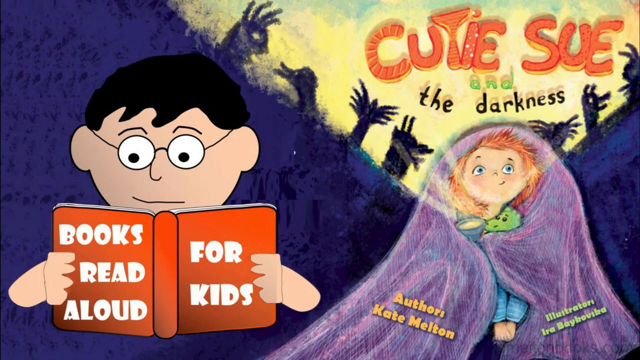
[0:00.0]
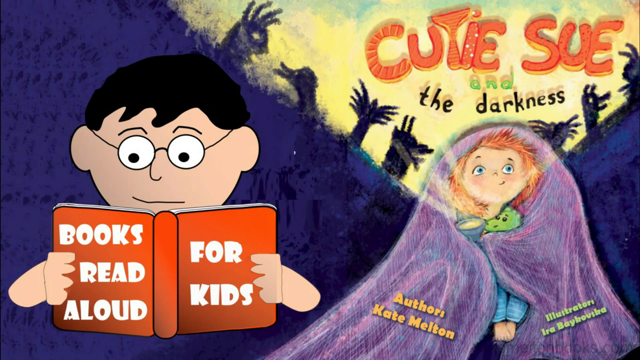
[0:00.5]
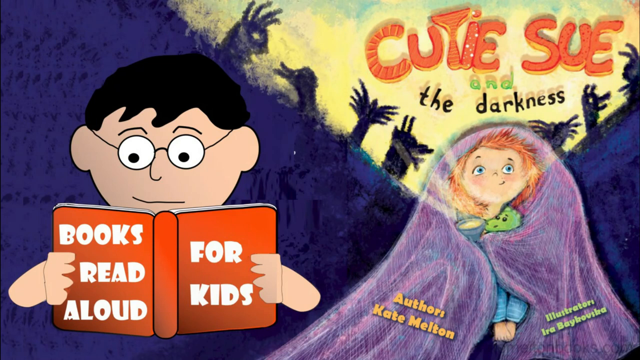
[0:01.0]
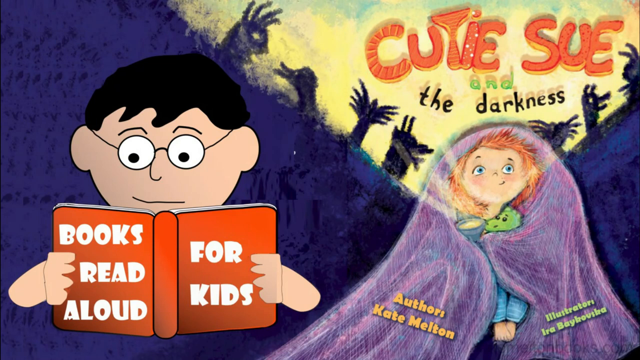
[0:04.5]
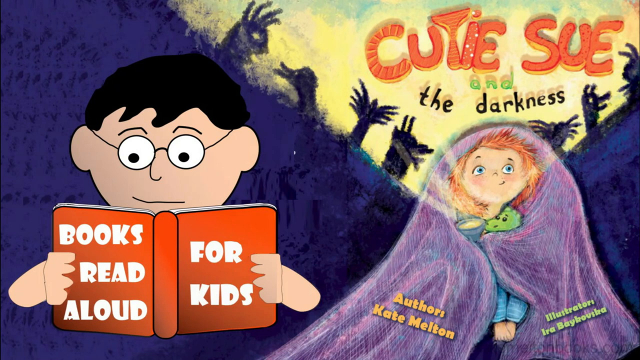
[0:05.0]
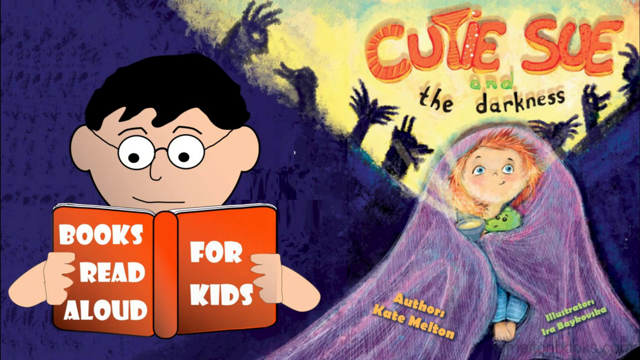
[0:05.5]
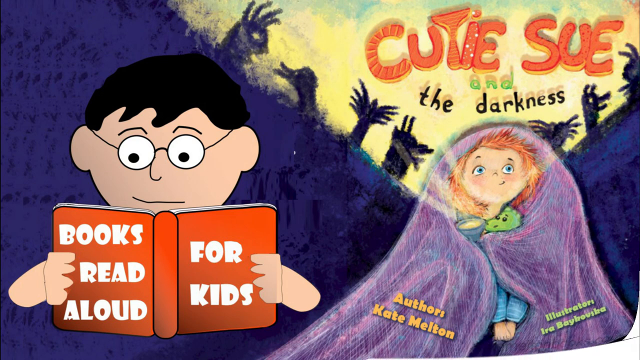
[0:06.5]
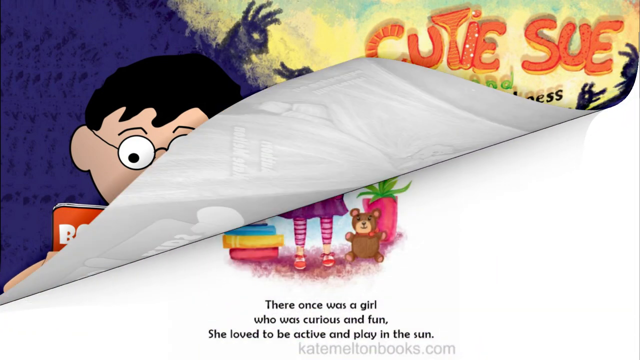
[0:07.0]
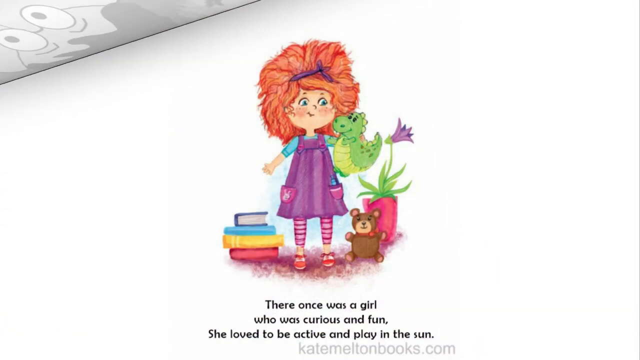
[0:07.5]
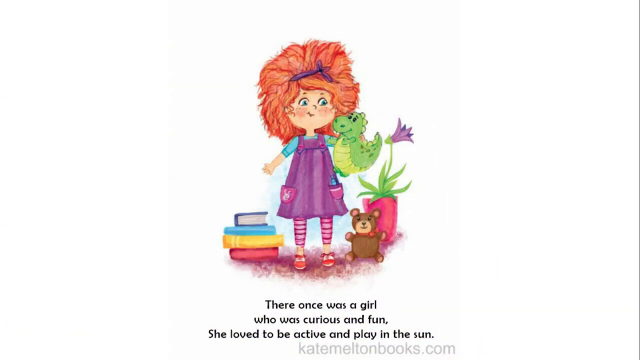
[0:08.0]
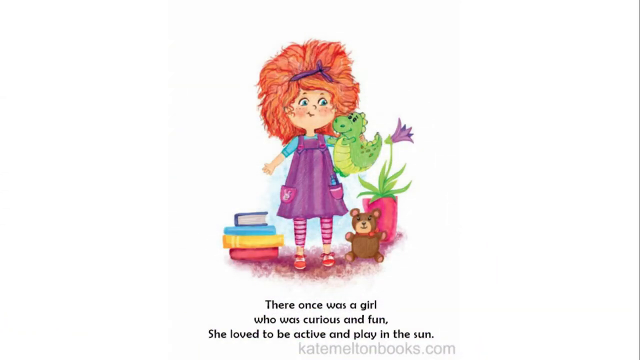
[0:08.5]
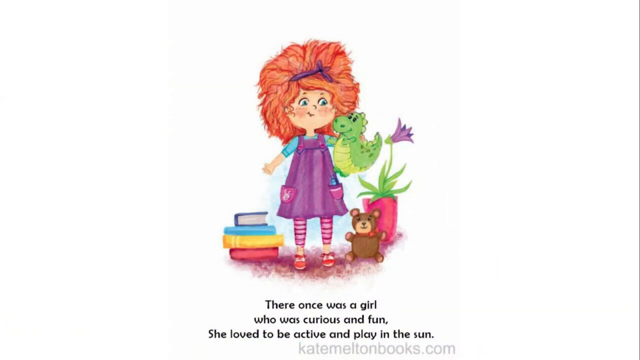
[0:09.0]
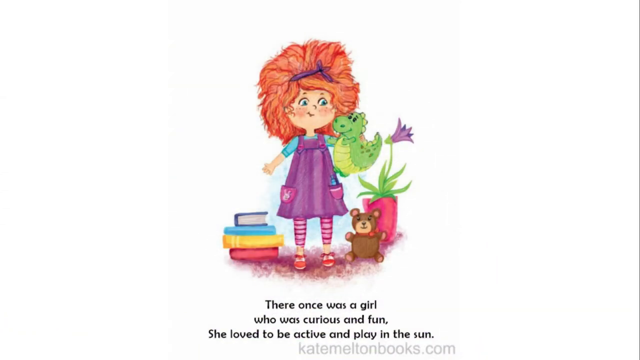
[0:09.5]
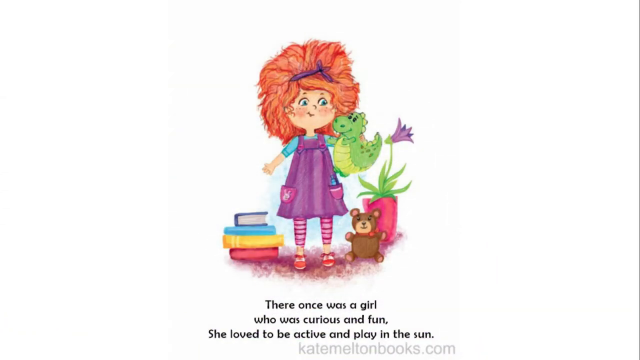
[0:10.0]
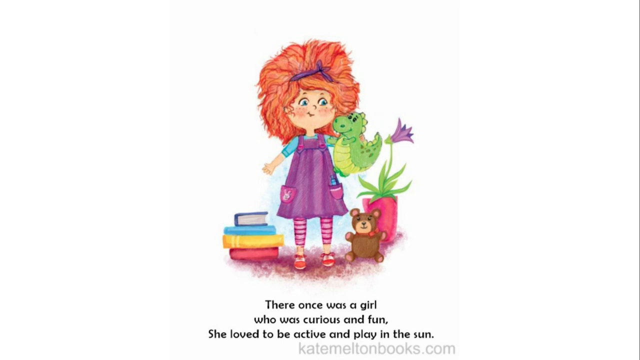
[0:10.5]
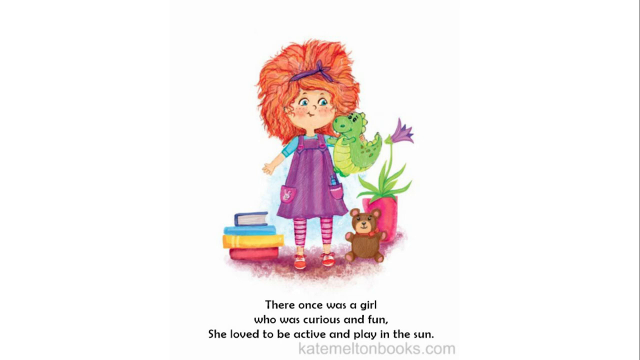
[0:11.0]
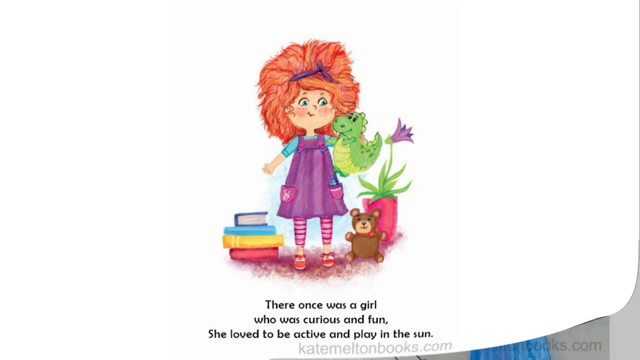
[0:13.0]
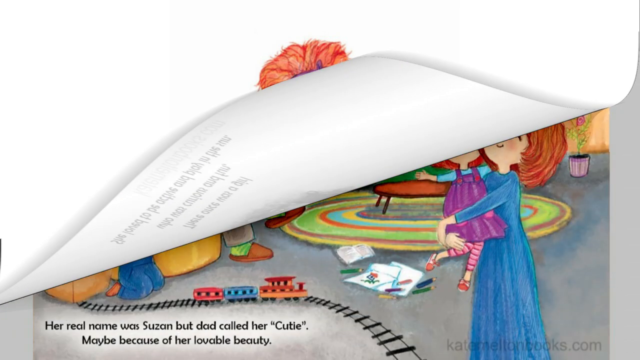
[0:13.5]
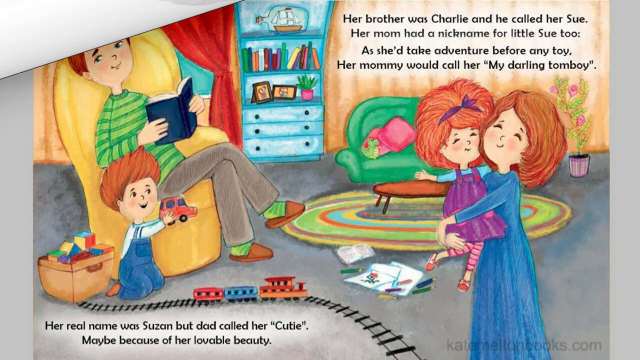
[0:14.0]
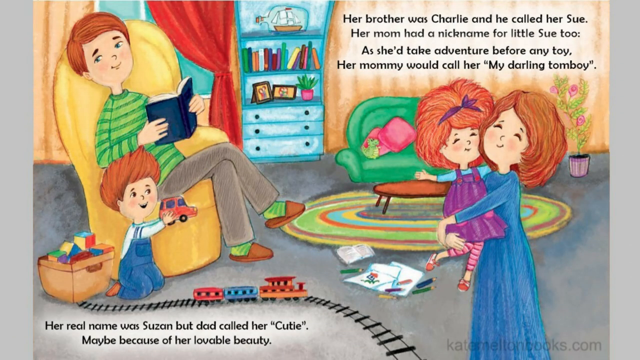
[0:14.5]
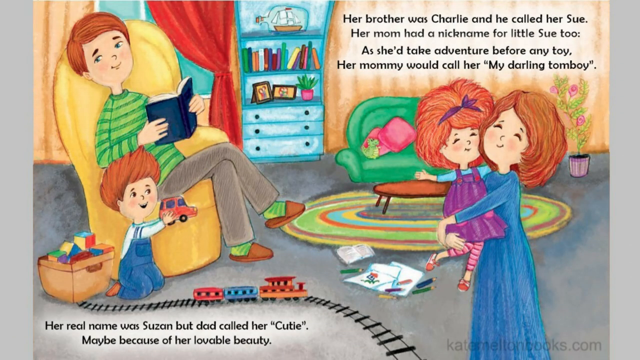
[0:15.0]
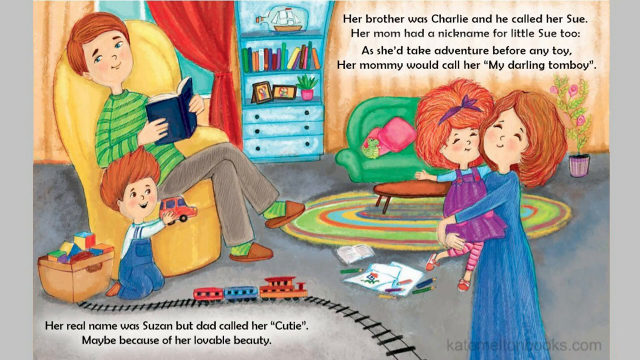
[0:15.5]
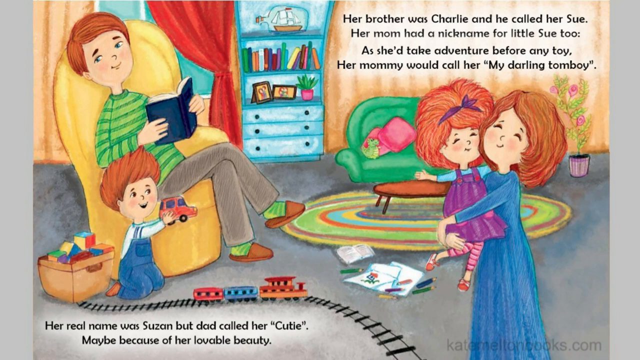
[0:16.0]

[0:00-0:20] The front cover of a storybook is displayed. In the top right, orange writing reads "Cutie Sue in the Darkness." Below it is a girl with orange hair with a blanket covering her; she holds a flashlight and a green dinosaur. Darkness surrounds her, and there are shadows all around the girl on the right. At the bottom the text reads "Author Kate Melton." On the left side of the page, a kid with black hair and glasses reads an orange book, with the text "Books read aloud for kids." The video stays on this page, and the text "Illustrator Ira Iovska" appears. It then changes to a new page reading "There was once a girl who was curious and fun. She loved to be active and play in the sun." This page shows a girl with orange hair holding a dinosaur, with books around her.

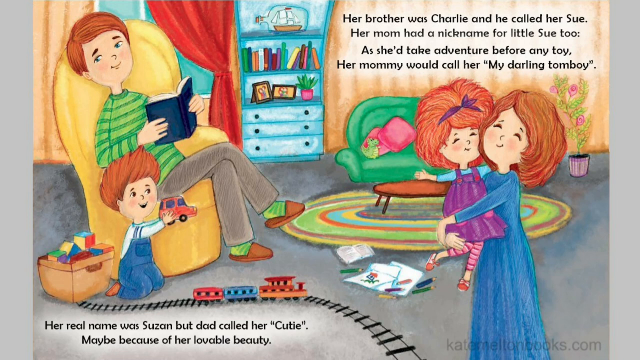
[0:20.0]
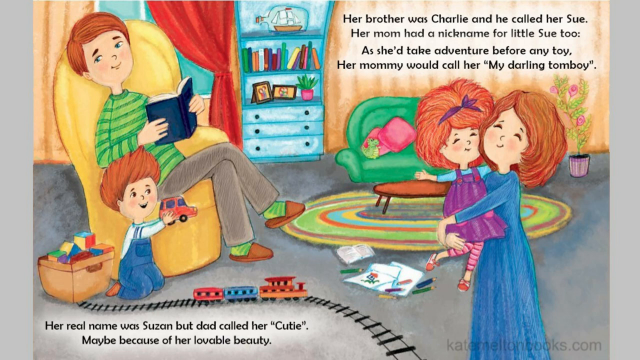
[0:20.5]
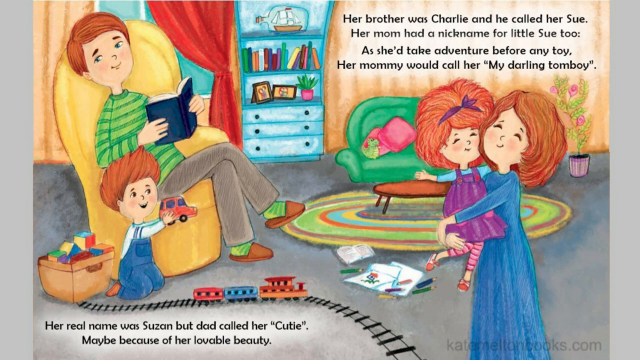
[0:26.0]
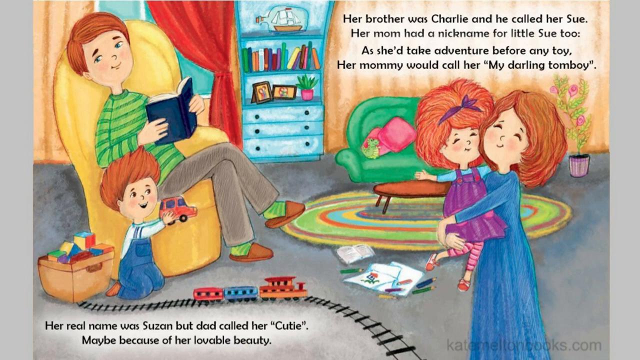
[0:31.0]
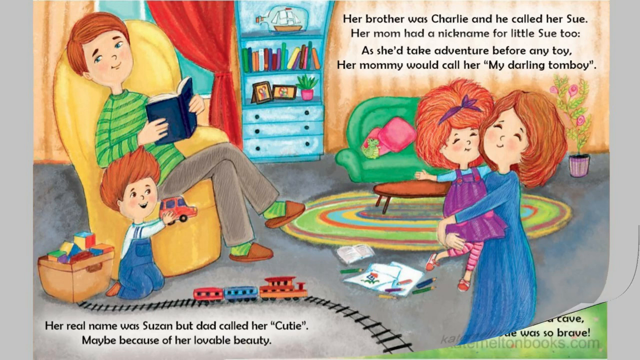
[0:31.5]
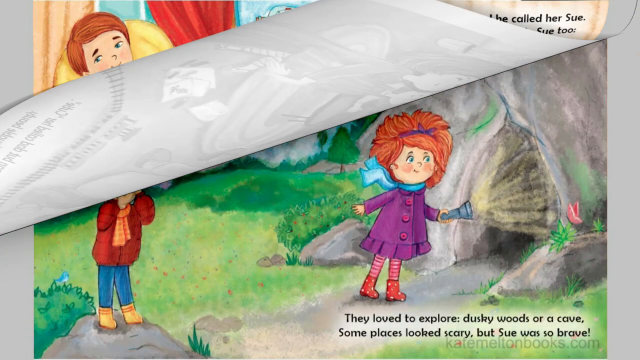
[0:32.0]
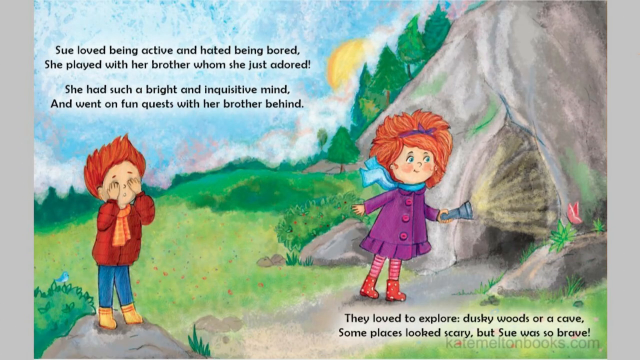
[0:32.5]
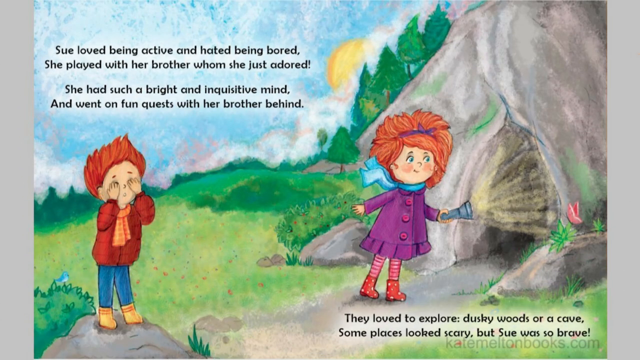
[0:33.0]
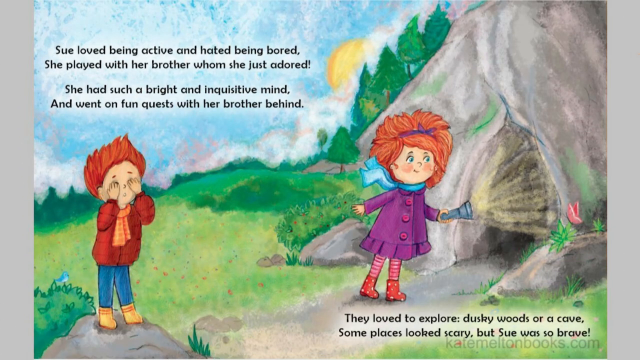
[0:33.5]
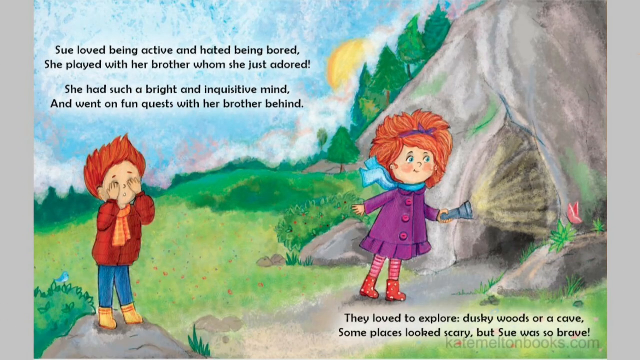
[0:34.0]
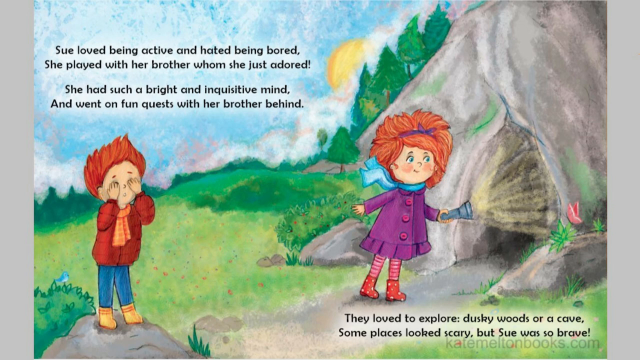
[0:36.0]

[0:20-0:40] A page from the book shows an illustration of a room inside a house. A person sits in a chair holding an open blue book, wearing a green striped shirt and brown pants. A child on the ground next to them plays with trains on a train set; the child wears a blue shirt and holds a car. On the right side, a table is on top of a carpet, and next to the table is a green seat. Text at the top of the page begins "Her brother was Charlie and he called her Sue" and ends "her mommy would call her my darling tomboy." The page also shows a woman holding a child in her arms.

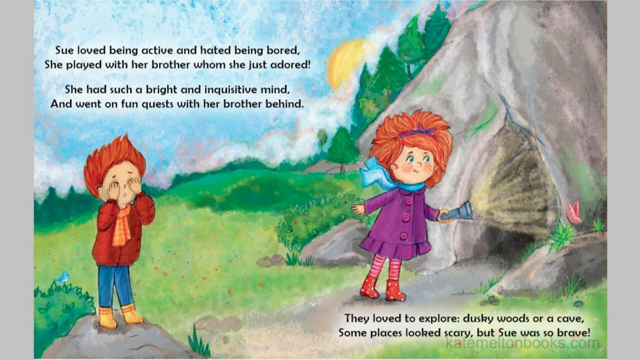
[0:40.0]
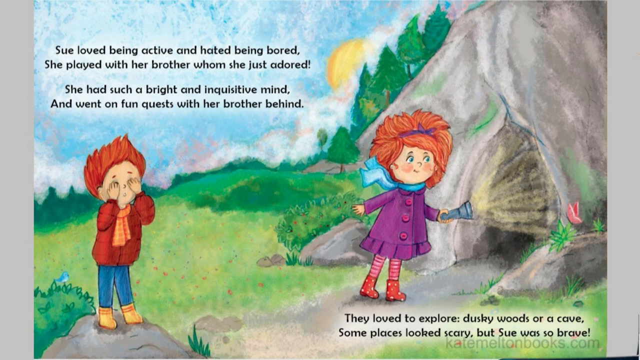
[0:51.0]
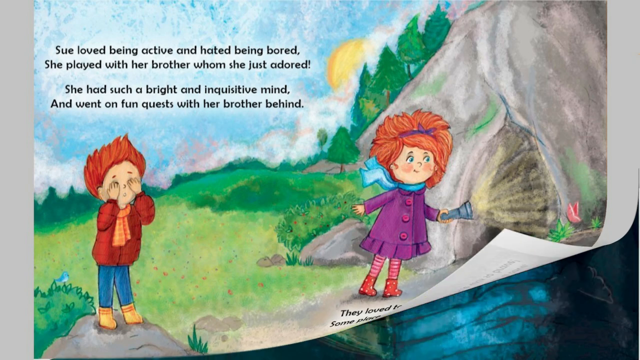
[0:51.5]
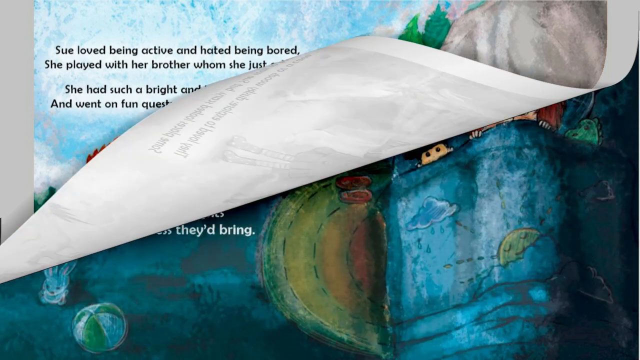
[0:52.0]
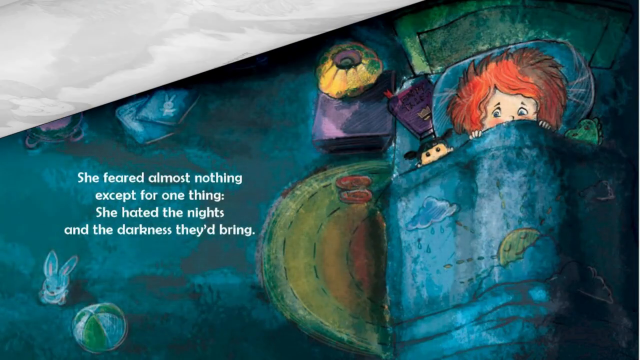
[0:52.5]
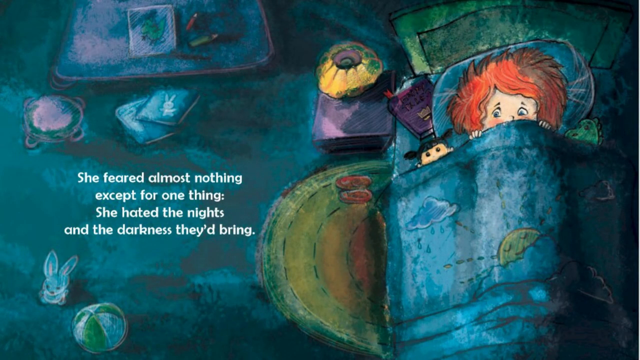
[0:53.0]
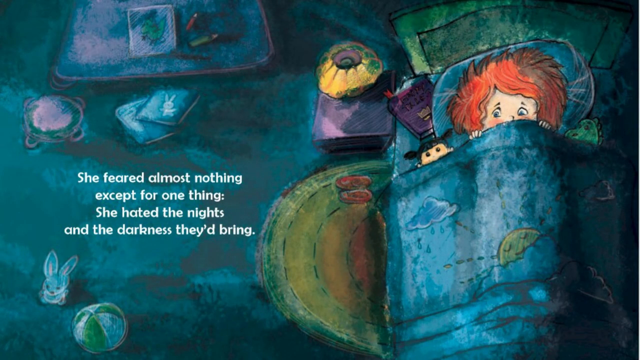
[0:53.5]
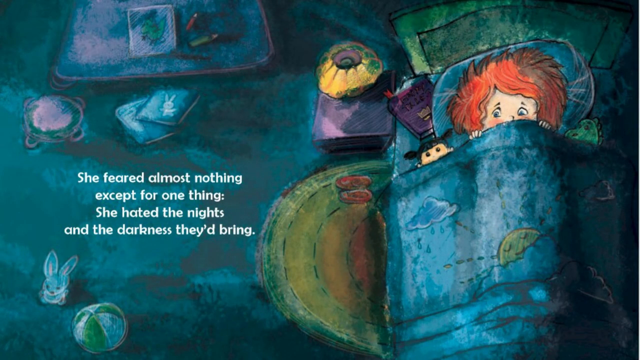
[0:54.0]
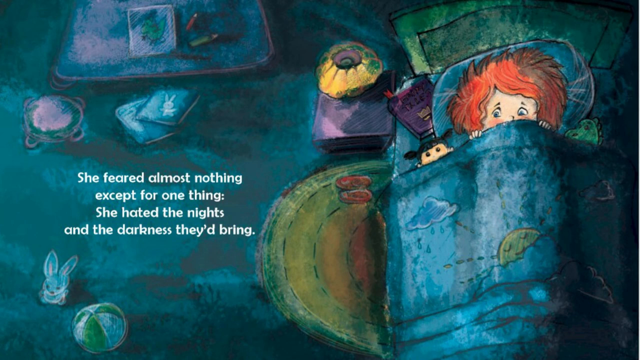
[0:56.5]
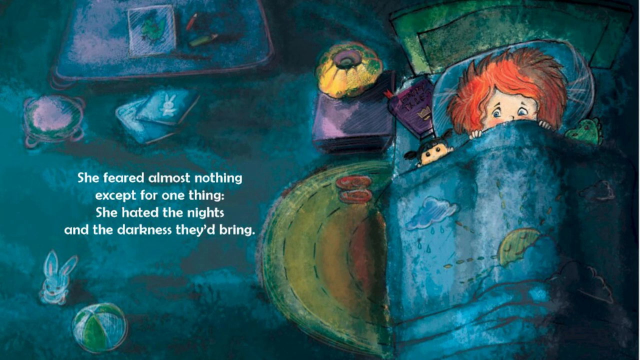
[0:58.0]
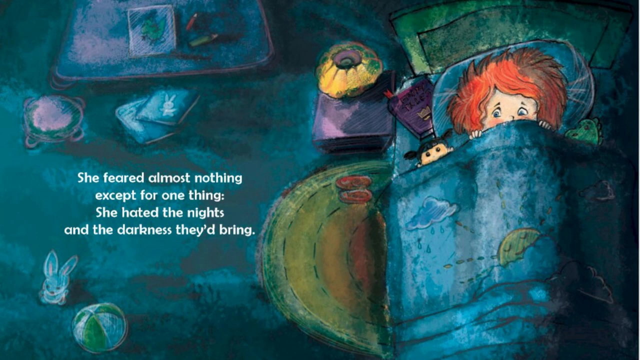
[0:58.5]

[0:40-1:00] Another illustrated page from the book has text on top of a cloud in the top left: "Sue loved being active and hated being bored. She played with her brother whom she just adored. She had such a bright and inquisitive mind and she went on fun quests with her brother behind." A girl with frizzy orange hair, wearing a blue scarf and a red sweater, points a flashlight inside a cave. The boy behind her stands on grass with both hands covering his eyes; he has orange hair and wears an orange scarf and blue pants. Trees are in the background. Text in the bottom left begins "They loved to explore the dusky woods" and continues "Some places looked scary, but Sue was so brave."